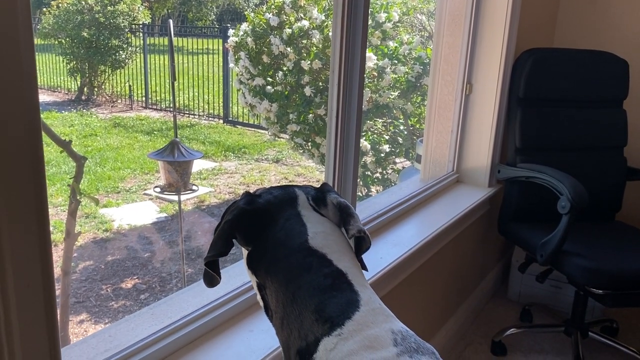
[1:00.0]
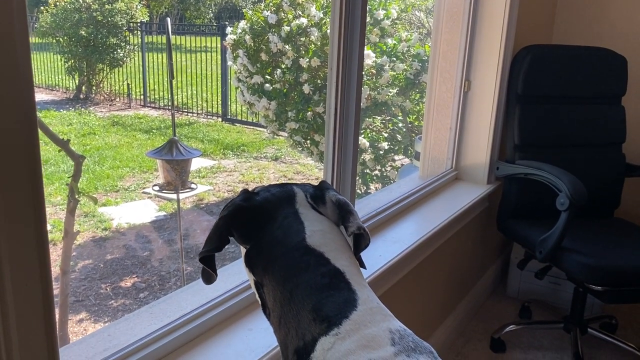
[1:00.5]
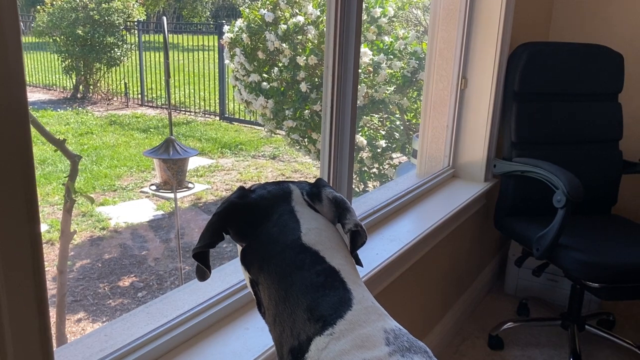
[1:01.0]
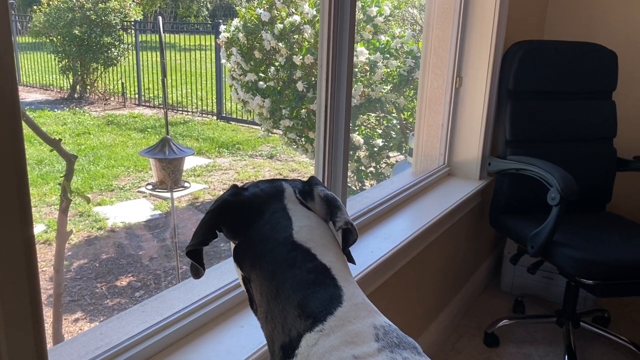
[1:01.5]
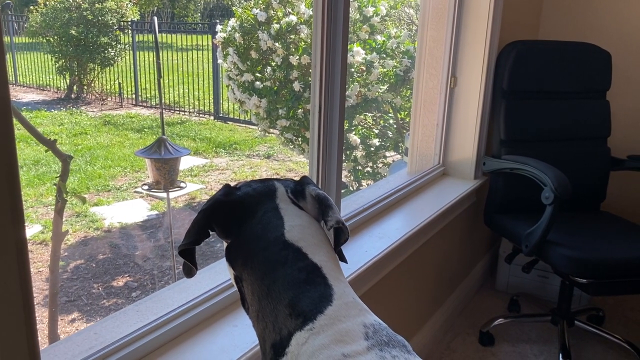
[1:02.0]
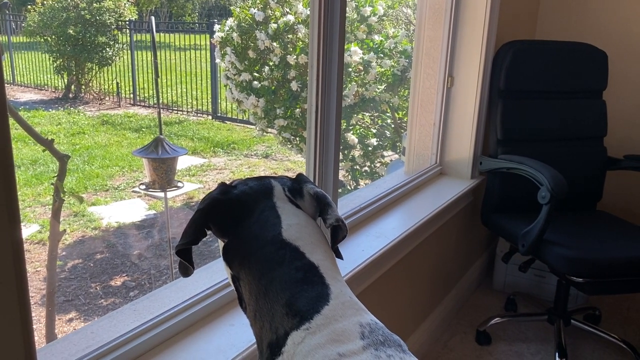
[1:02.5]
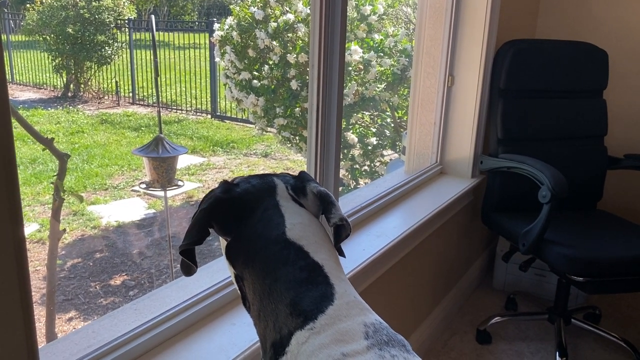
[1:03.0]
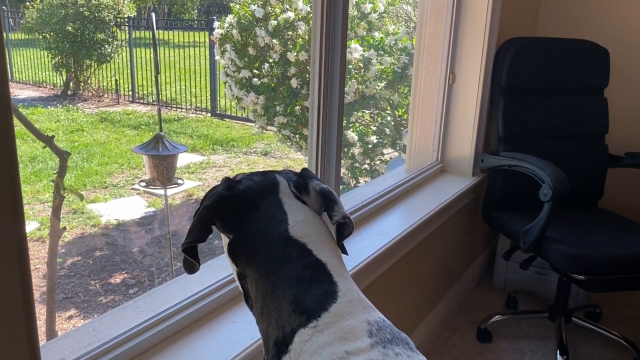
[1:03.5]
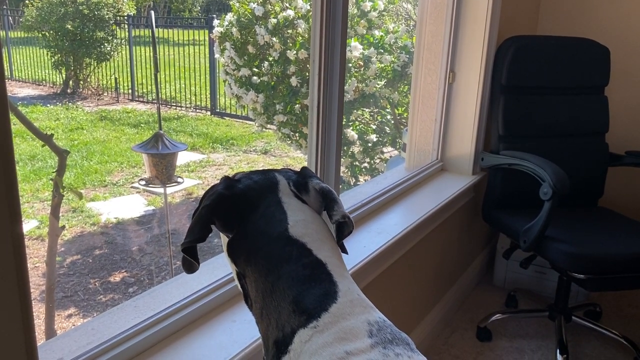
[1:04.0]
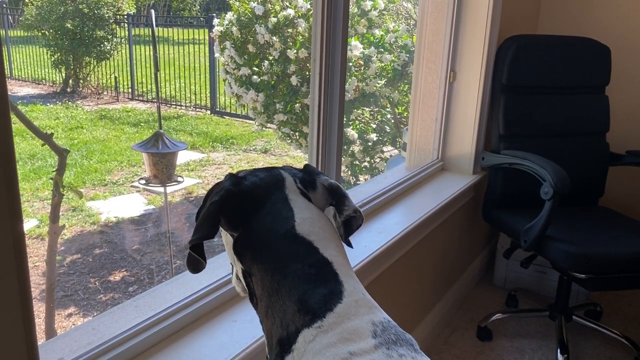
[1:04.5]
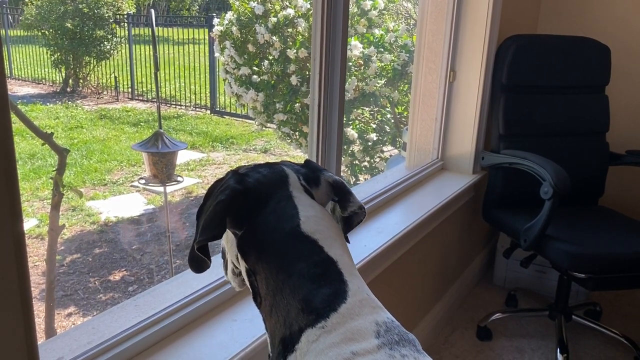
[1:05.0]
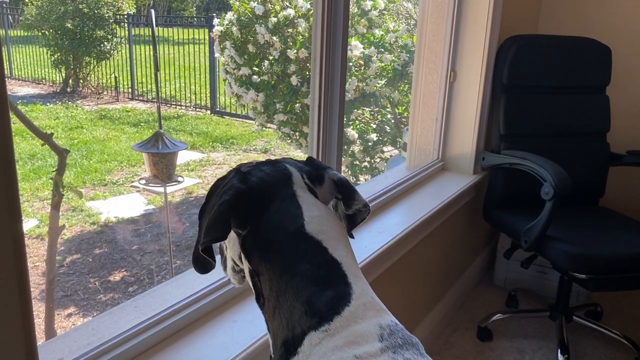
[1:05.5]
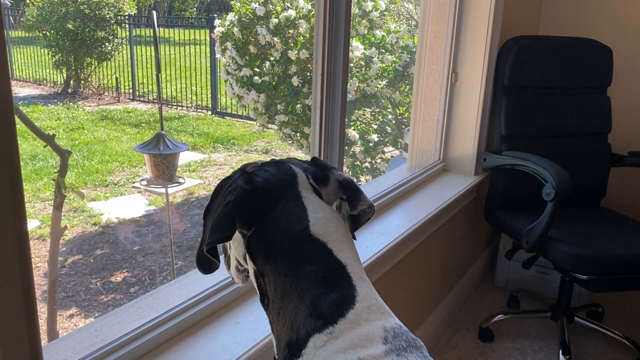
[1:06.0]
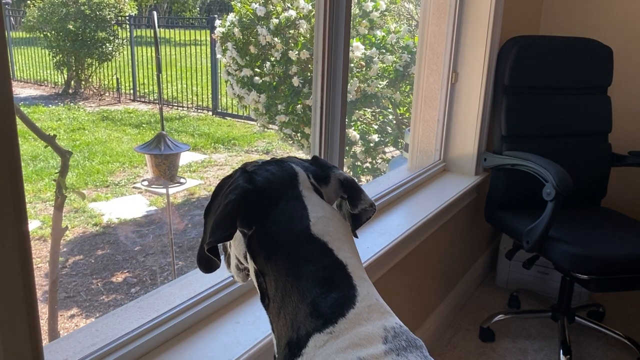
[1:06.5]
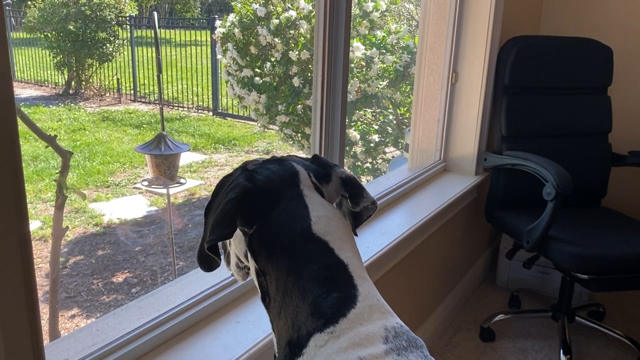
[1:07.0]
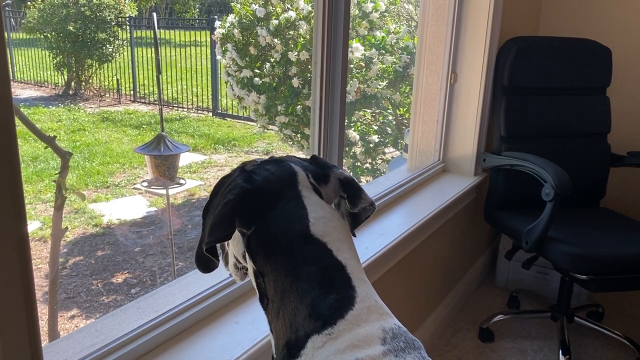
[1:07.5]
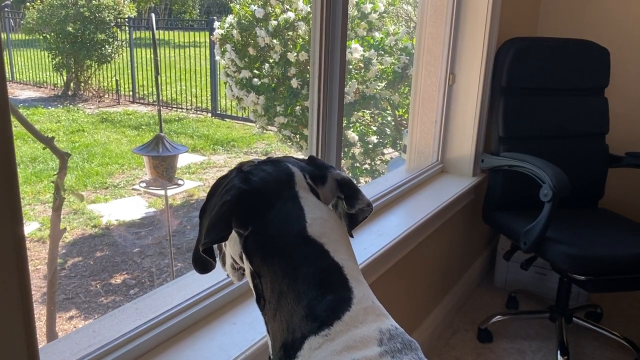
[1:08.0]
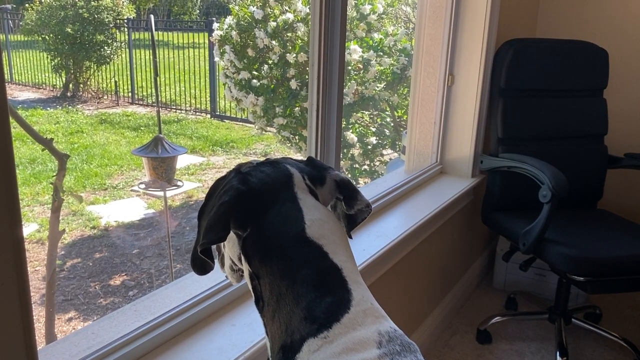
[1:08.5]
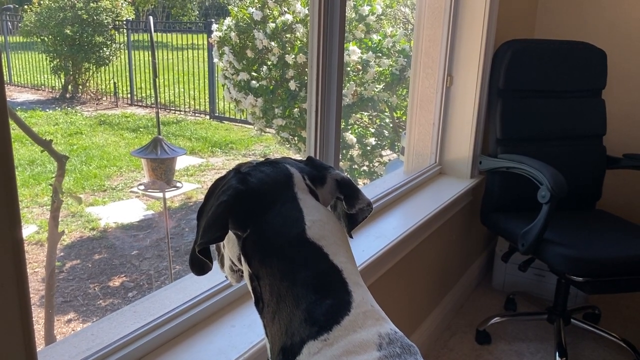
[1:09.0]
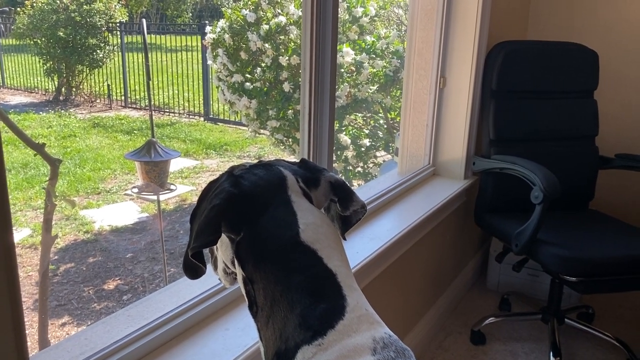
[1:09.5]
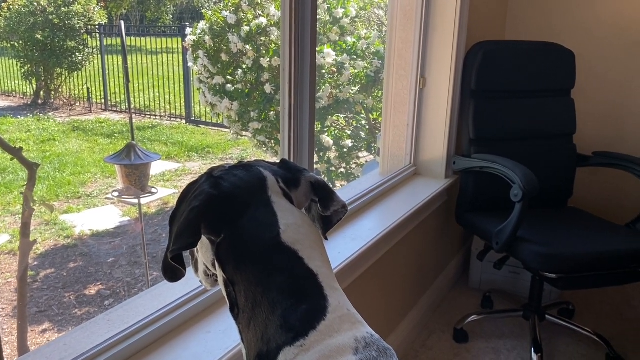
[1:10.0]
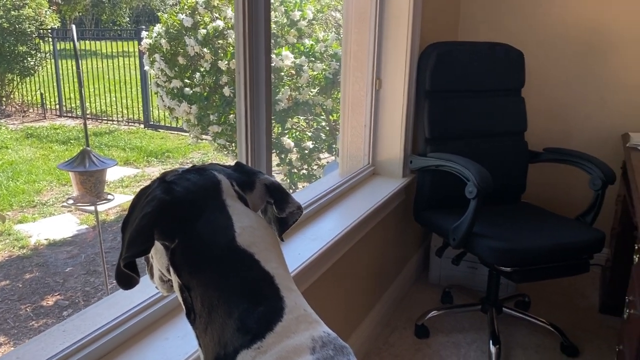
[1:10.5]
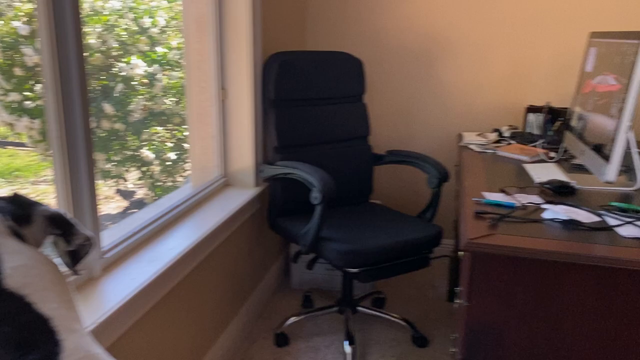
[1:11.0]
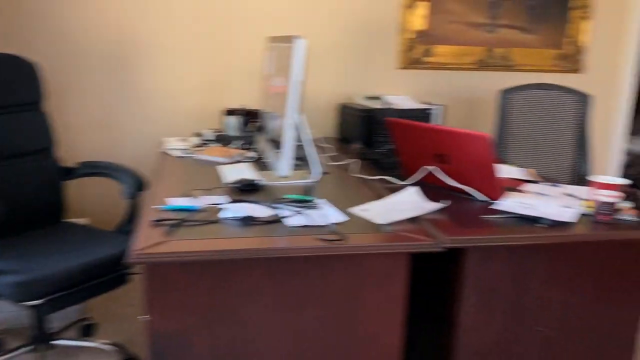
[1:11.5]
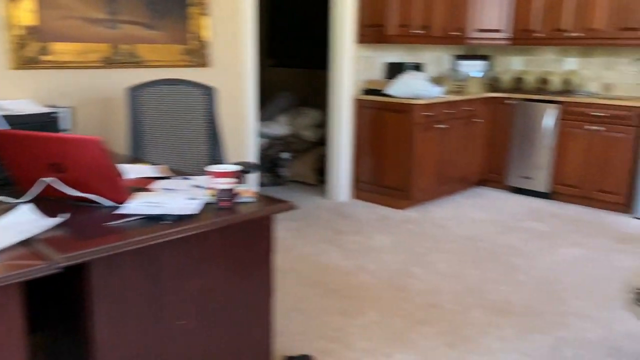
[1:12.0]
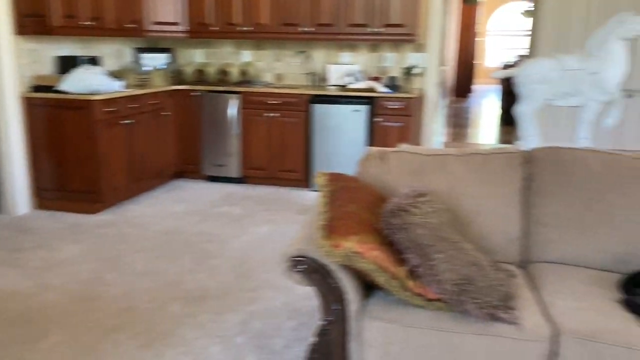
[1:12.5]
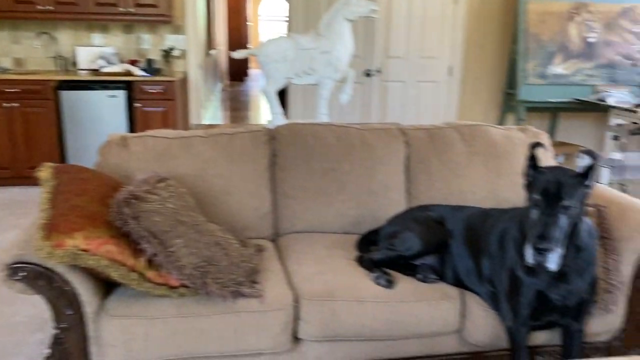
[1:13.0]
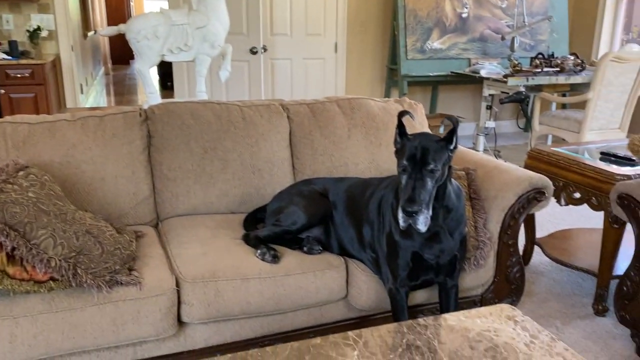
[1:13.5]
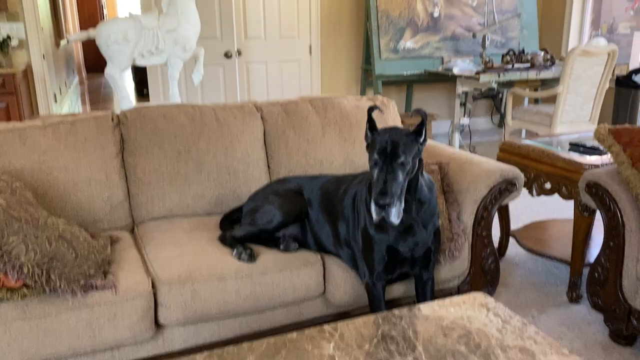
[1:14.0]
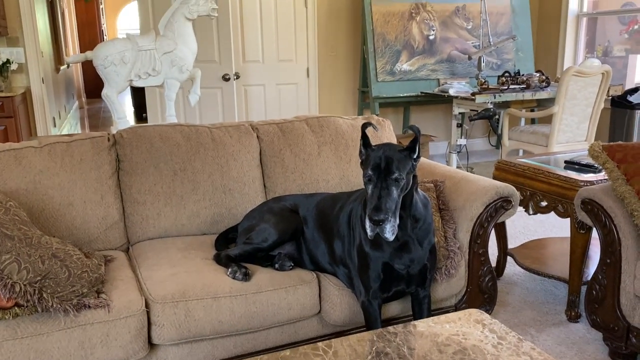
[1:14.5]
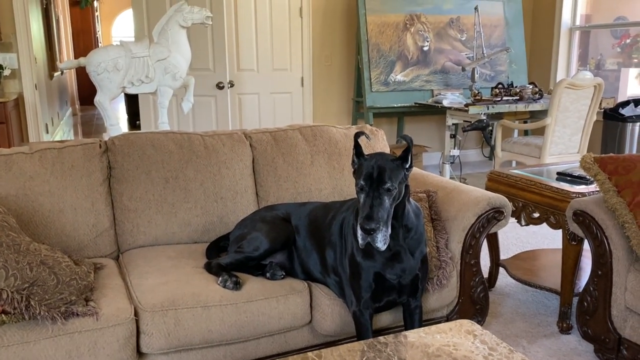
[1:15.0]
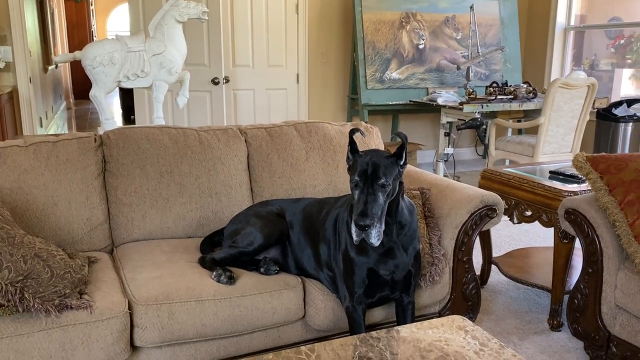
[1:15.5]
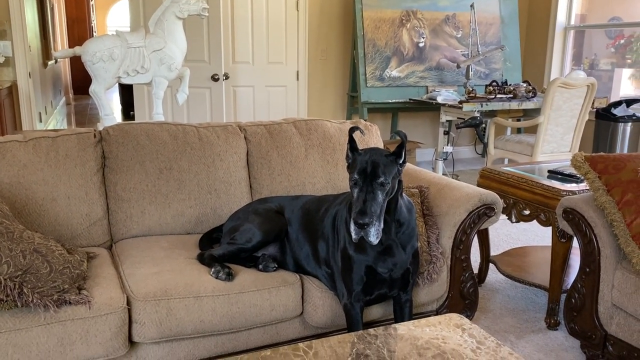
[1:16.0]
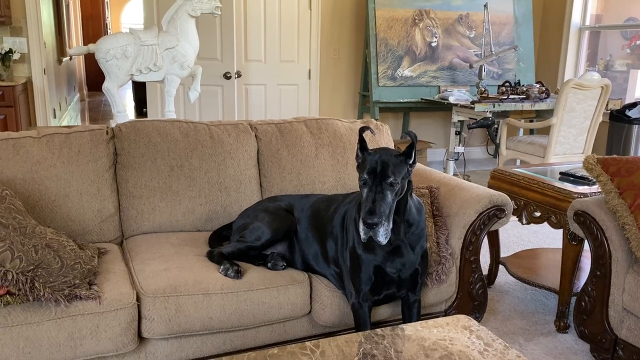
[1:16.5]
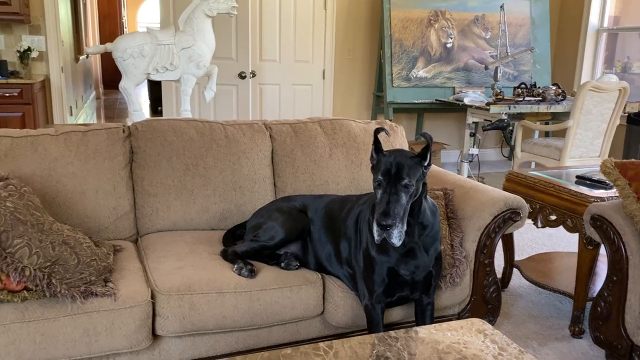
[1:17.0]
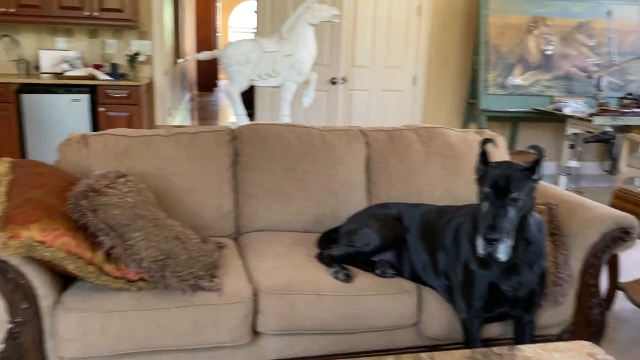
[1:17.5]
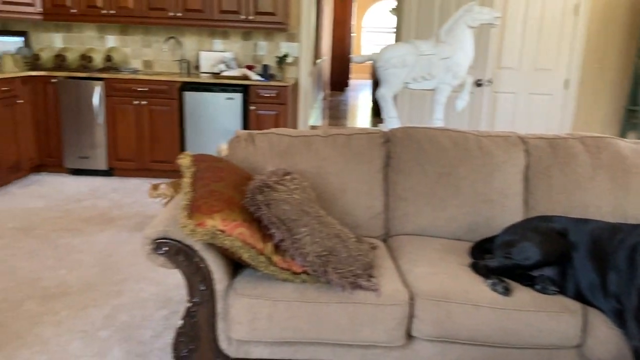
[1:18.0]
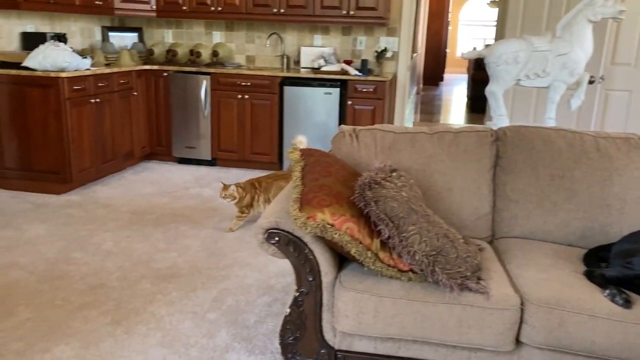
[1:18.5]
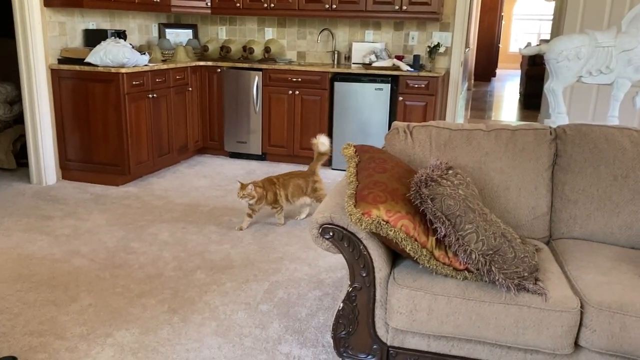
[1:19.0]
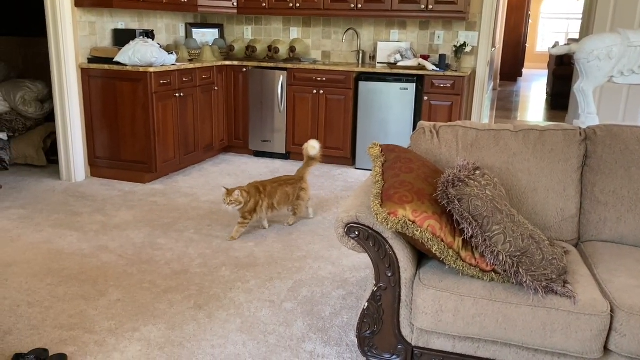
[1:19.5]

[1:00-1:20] Next to the window the dog is looking out of, there is a black office chair. Next to the metal fence in the backyard, some grass is missing around the small trees or bushes planted along the fence line. The bird feeder outside is hung on a large metal hook, and a stick is resting on the outside of the window. One of the dog's ears is black and the other is spotted black and white, and the back of its head is split down the middle with the black and white colors. The person then pans the camera back across the room, showing a large, very messy desk with a large Mac computer and a red MacBook. The other dog is still resting on the couch in the same position with its ears pointed inwards. An orange fluffy cat walks into the room from the kitchen area.